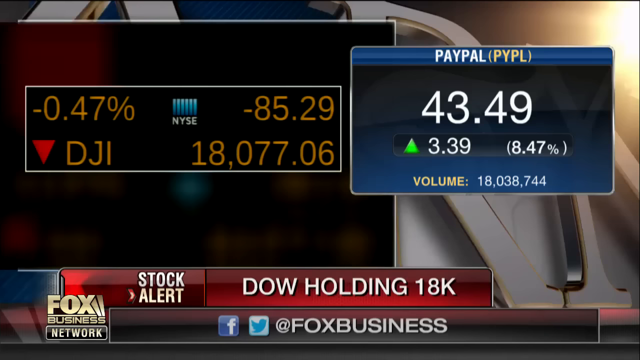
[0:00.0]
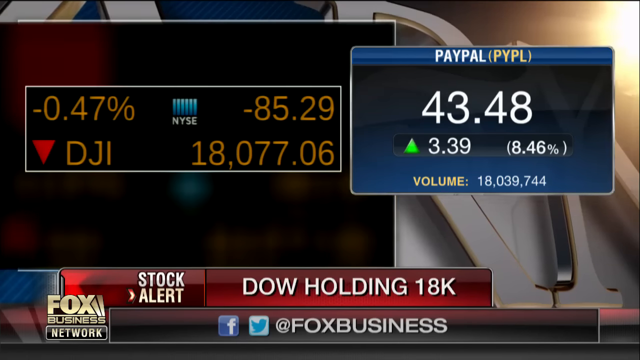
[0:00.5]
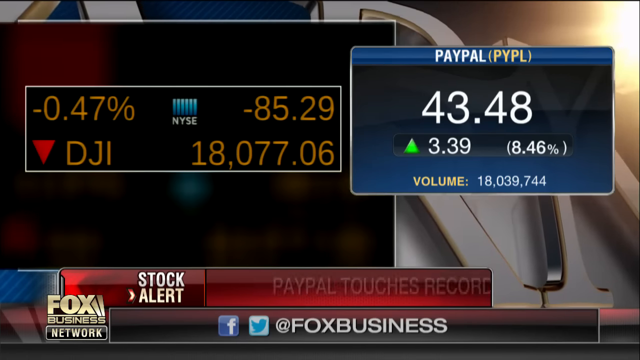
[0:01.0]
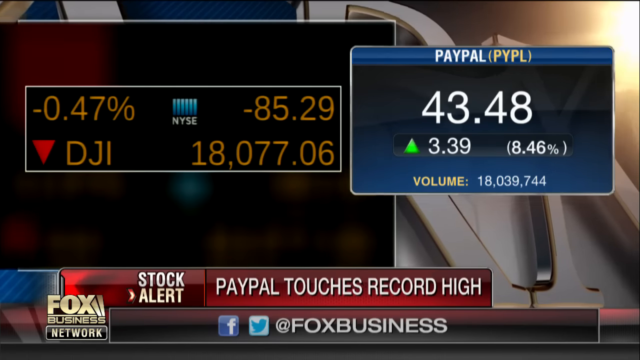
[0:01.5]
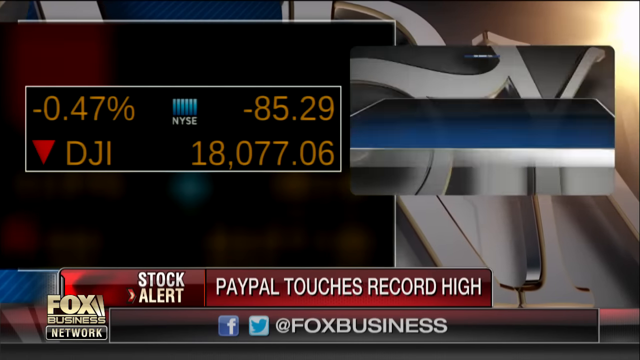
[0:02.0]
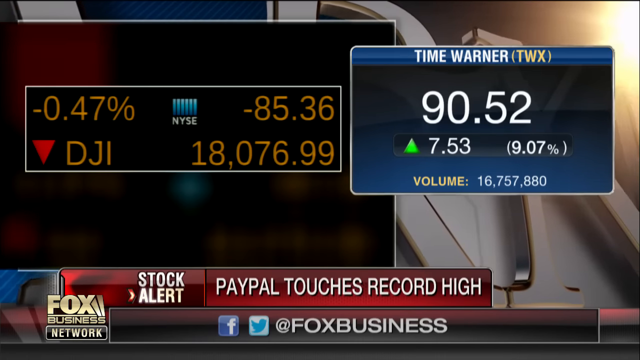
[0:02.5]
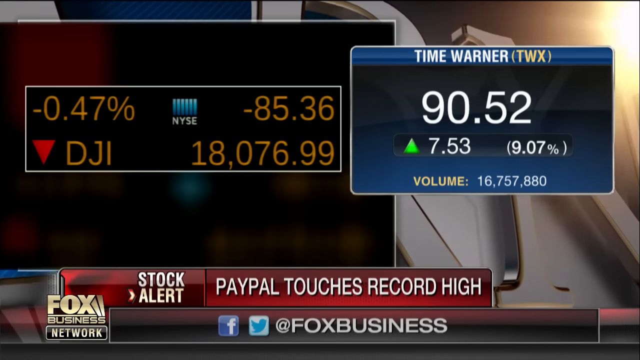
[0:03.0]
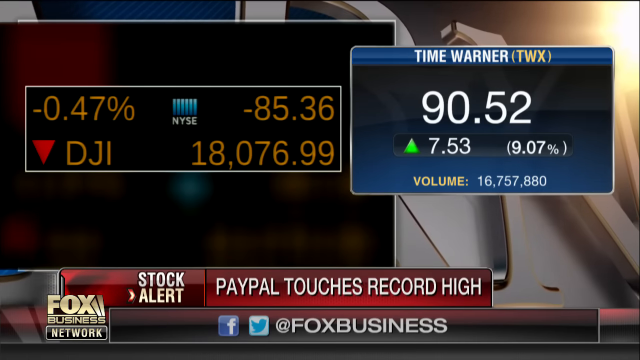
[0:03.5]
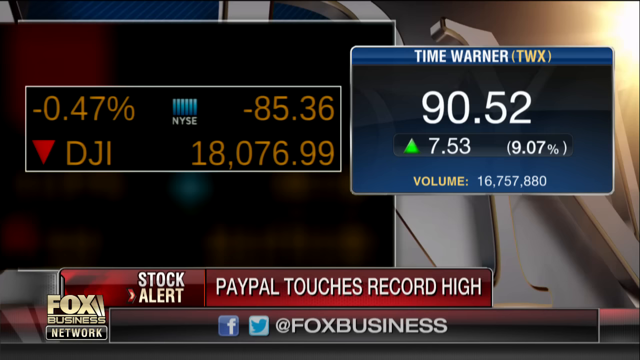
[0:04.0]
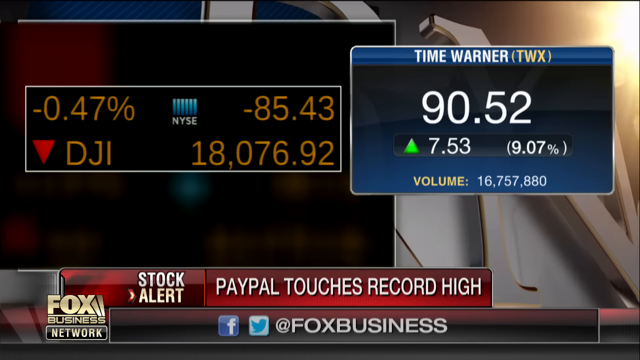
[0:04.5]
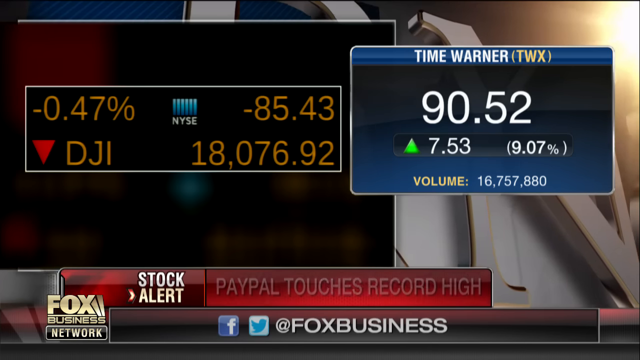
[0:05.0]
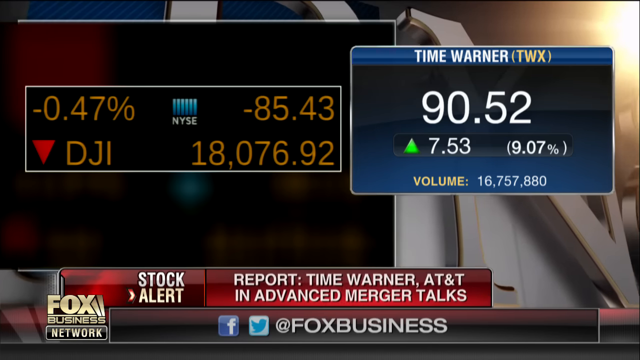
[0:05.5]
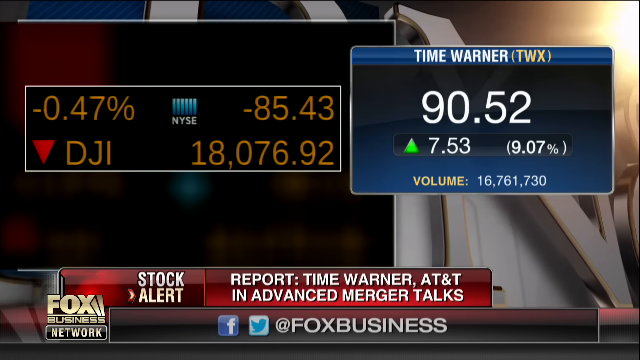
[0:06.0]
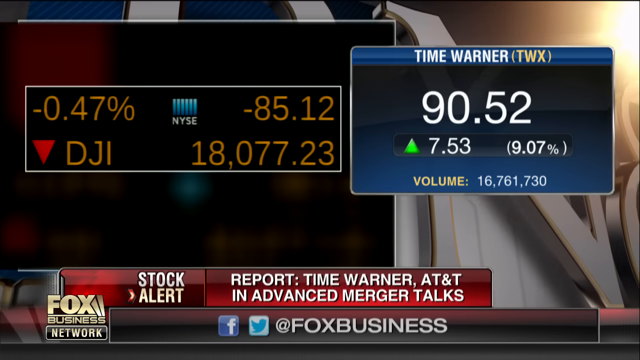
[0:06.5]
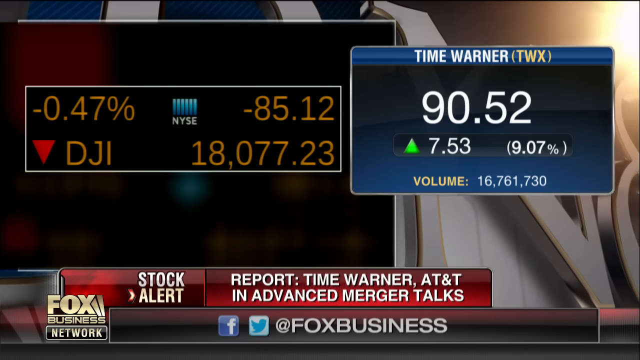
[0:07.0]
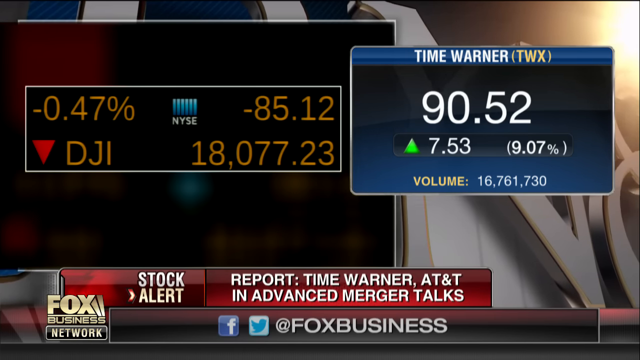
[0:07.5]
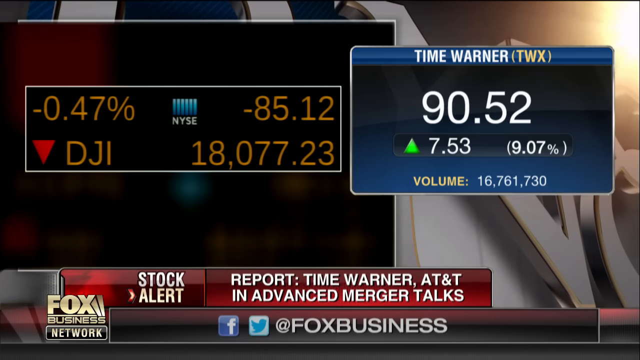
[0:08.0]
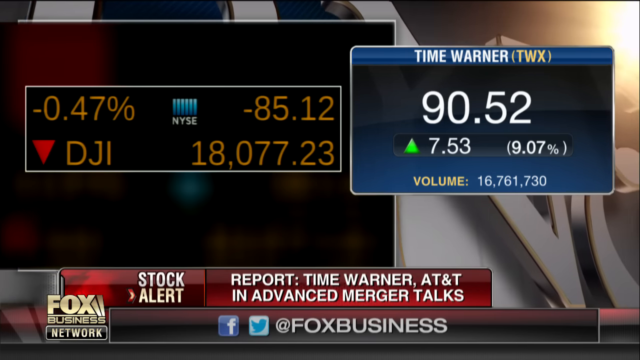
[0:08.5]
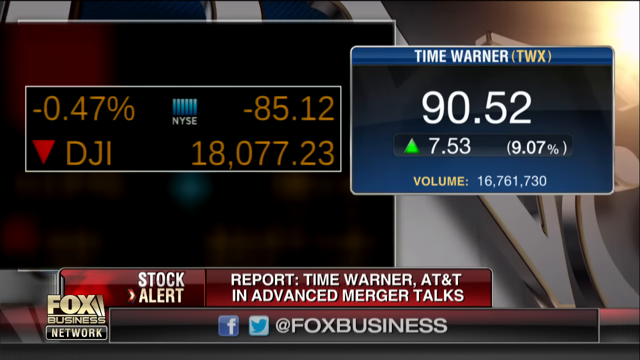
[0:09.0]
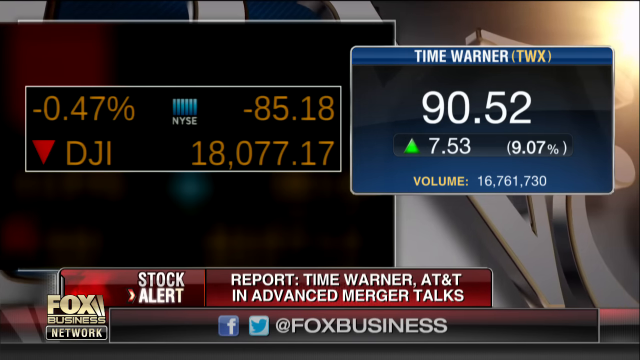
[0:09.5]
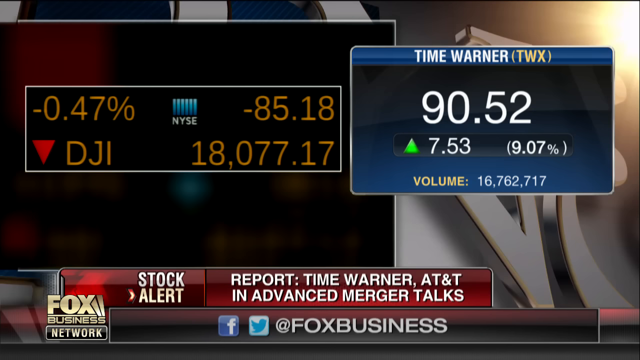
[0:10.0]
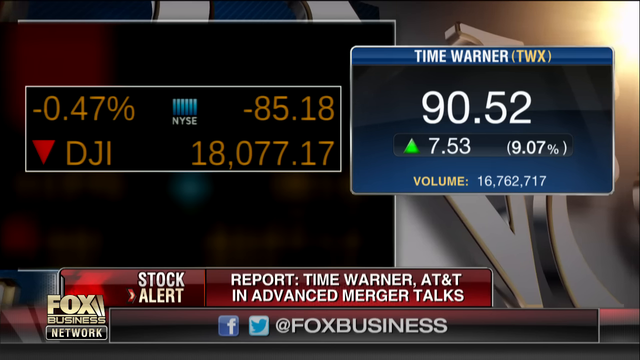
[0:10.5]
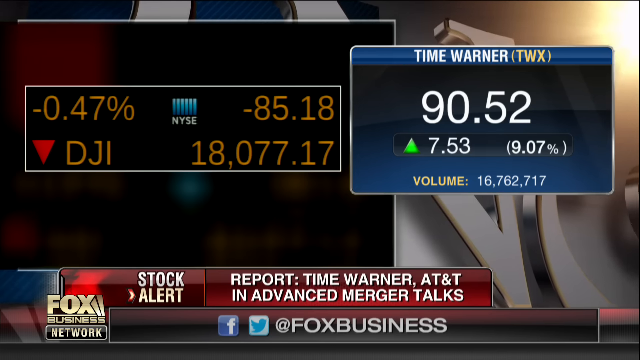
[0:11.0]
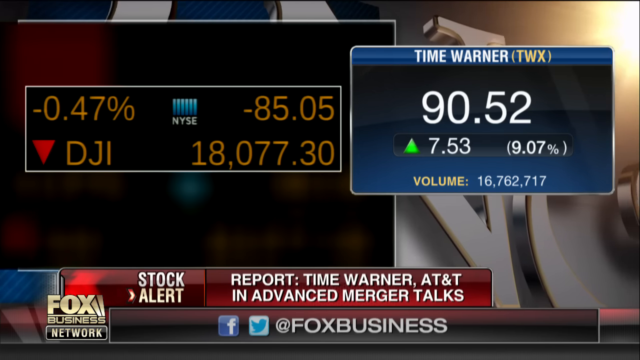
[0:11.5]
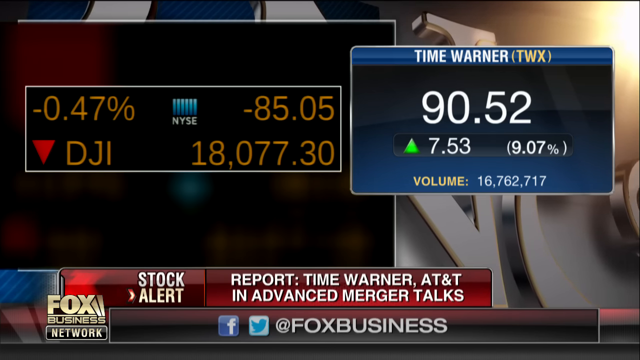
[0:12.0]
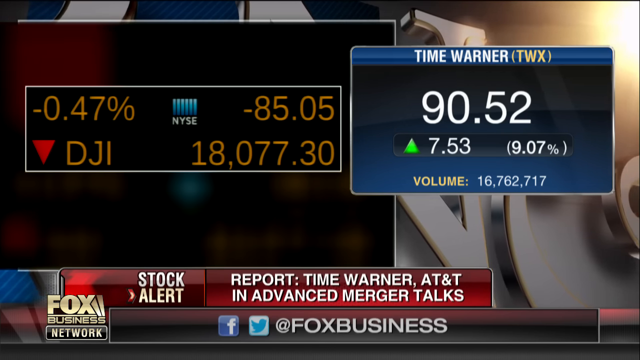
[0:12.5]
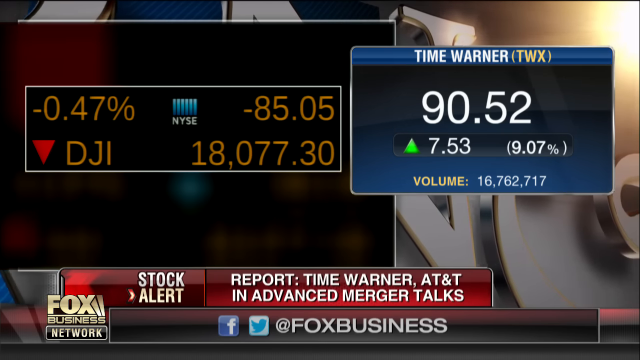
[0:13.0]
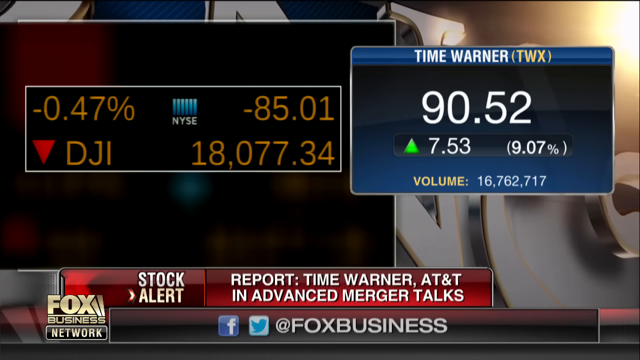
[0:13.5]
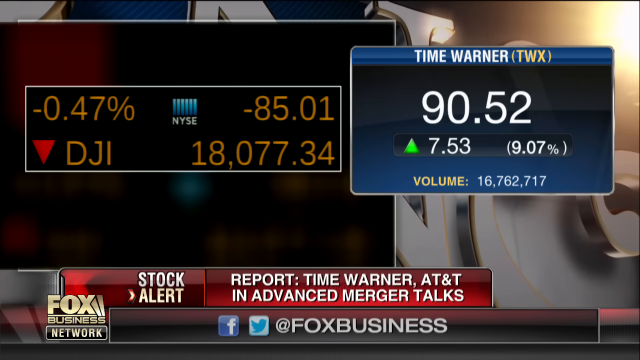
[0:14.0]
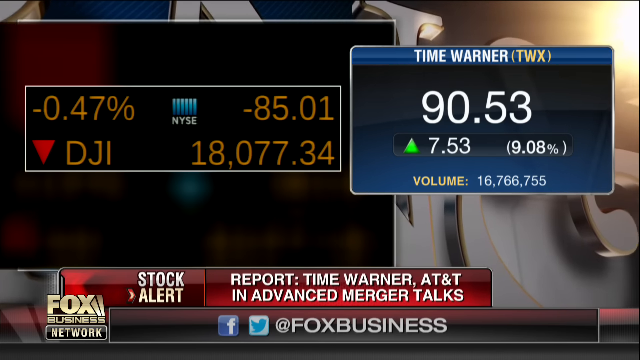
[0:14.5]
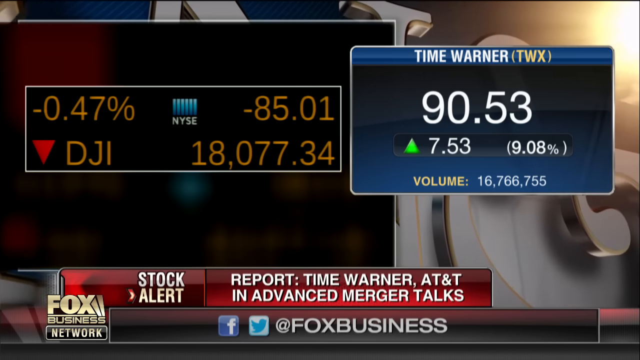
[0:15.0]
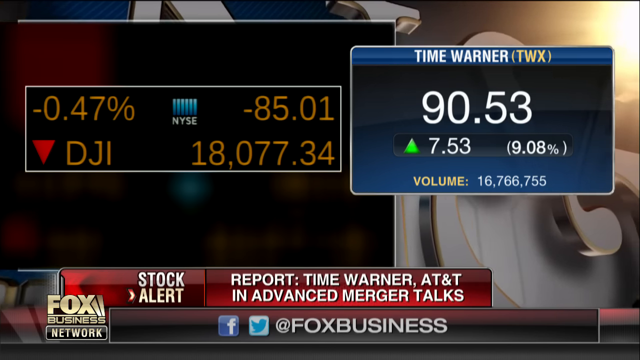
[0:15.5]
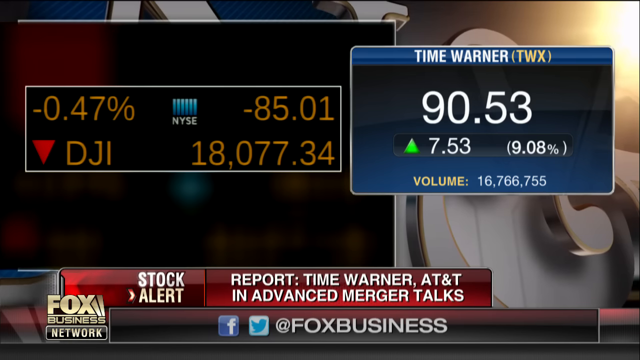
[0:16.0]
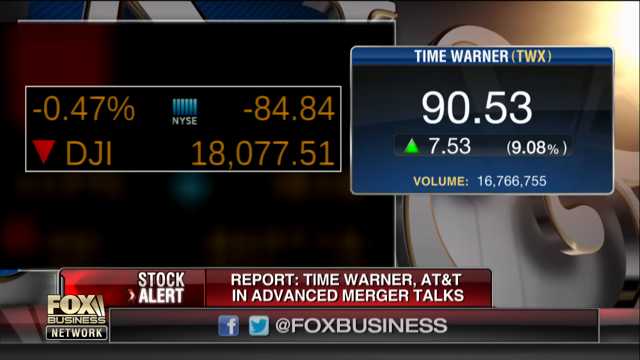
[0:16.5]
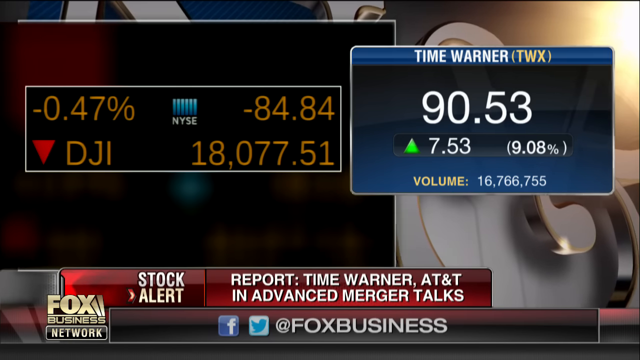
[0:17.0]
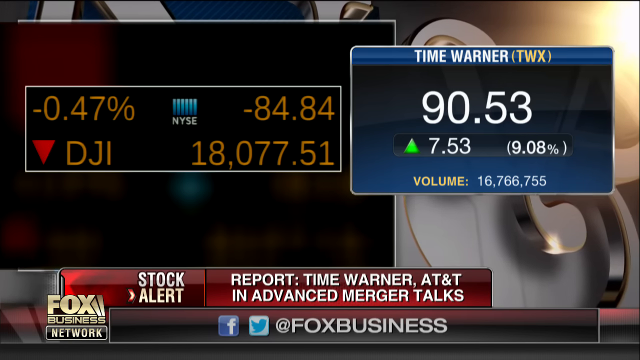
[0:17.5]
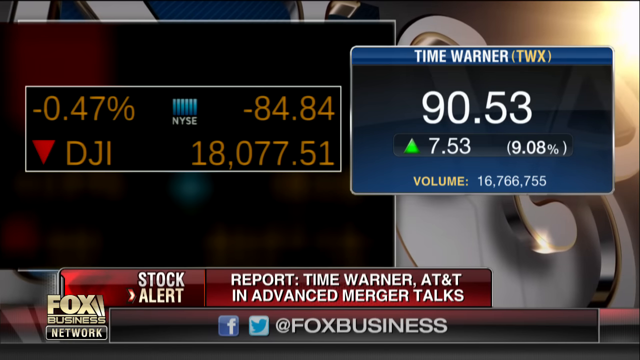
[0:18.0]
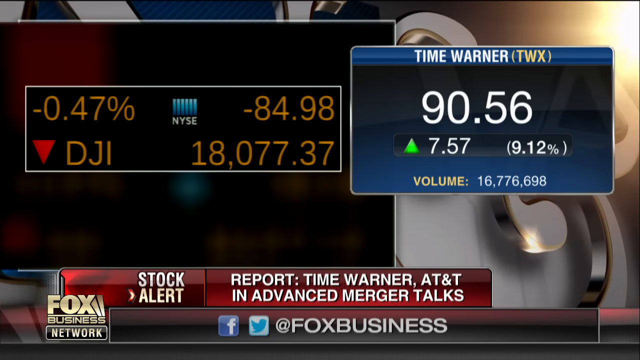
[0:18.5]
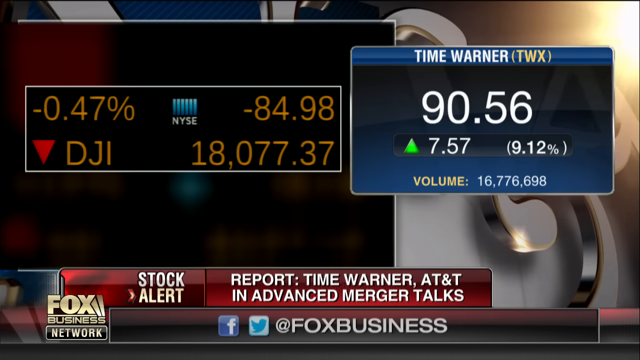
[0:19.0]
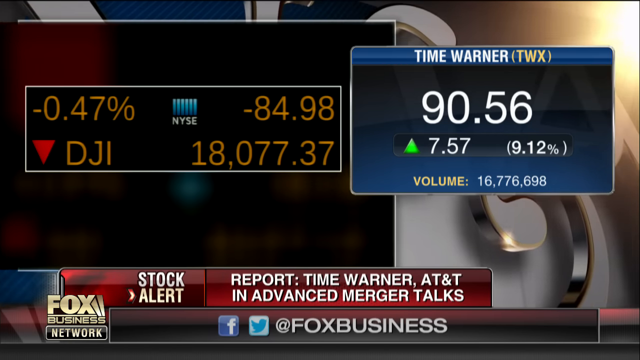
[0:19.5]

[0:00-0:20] The video opens on an image of a stock exchange on the left, with an inset rectangular window that has the NYSE logo at the top middle and orange numbers on its left and right sides. In the lower left corner of that window is a red upside-down rectangle with "DJI" next to it in orange. The Fox Business Network logo is in the lower left of the screen, and next to it are two news tickers, one on top of the other. The upper ticker is slightly offset so it is behind the Fox Business Network logo and reads "stock alert" and "Dow holding 18K." The lower ticker has Facebook and Twitter icons in rounded rectangles, followed to the right by "at Fox Business." On the right side of the screen, in a blue rounded frame overlapping the left one, is the PayPal stock, with "PayPal(PYPL)" as the heading at the very top and "43.49" in the middle. Under that is a green triangle with "3.39" next to it and "8.47" in parentheses, and at the bottom of the window "volume" appears in yellow followed by "18,038,744" in white. Three-dimensional text in the very back scrolls to the left. The top ticker changes to "PayPal touches record high." The right window flips from PayPal's stock to Time Warner (TWX) at 90.52, up 7.53, with 9.07 in parentheses and volume 16,757,880. The ticker at the bottom changes to a report about "Time Warner, AT&T" in "advanced merger talks." The volume then changes to $16,766,755, the number in parentheses to 9.08, and the price to $90.53.